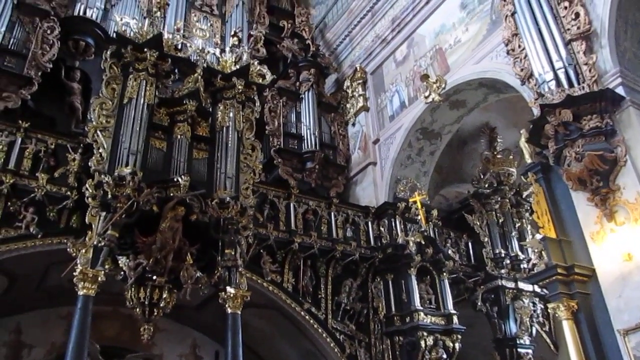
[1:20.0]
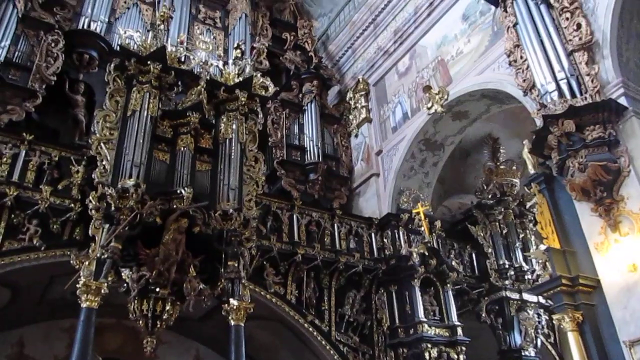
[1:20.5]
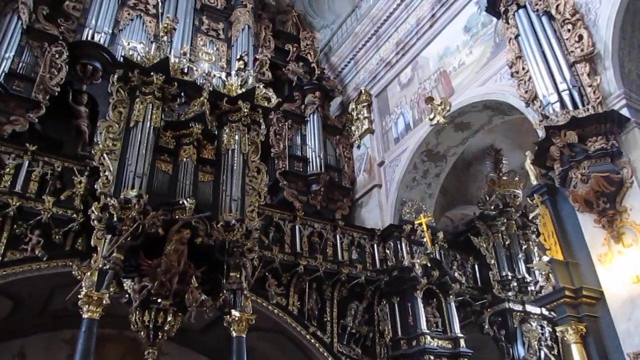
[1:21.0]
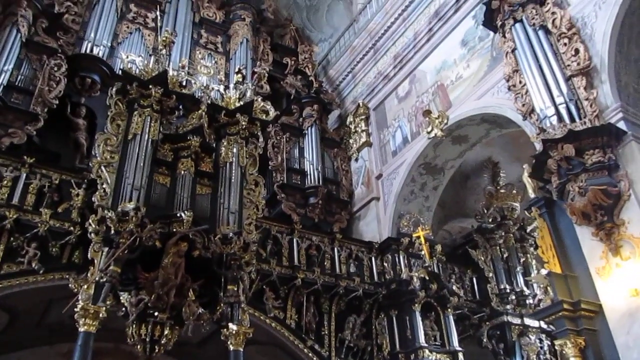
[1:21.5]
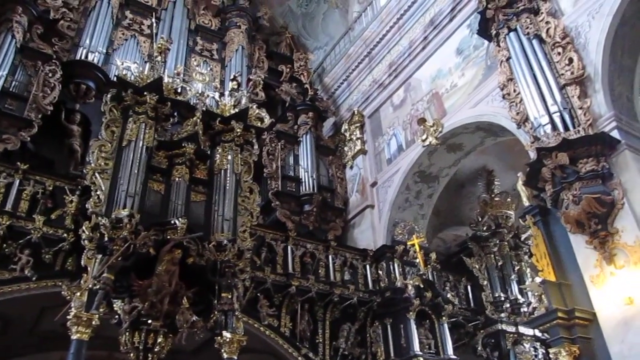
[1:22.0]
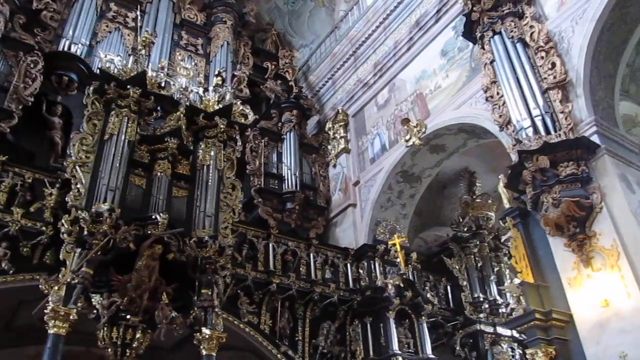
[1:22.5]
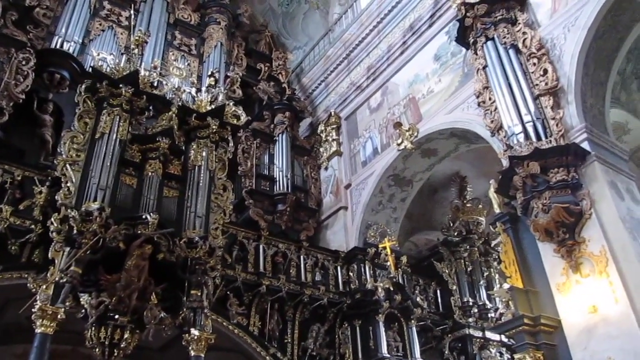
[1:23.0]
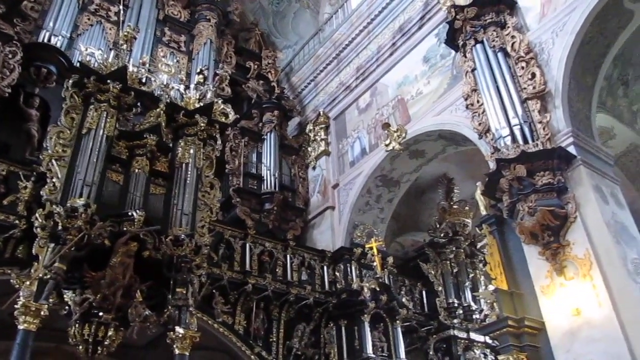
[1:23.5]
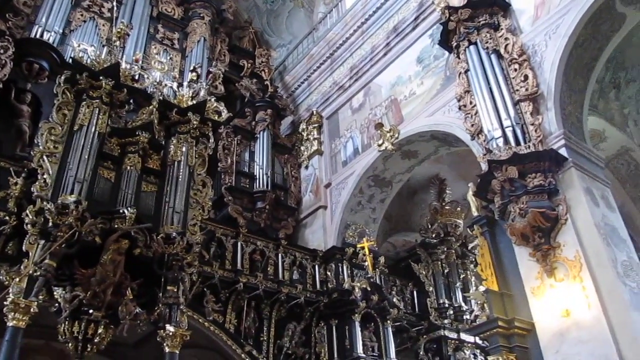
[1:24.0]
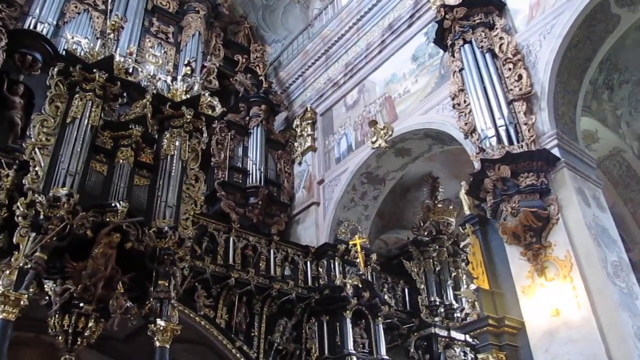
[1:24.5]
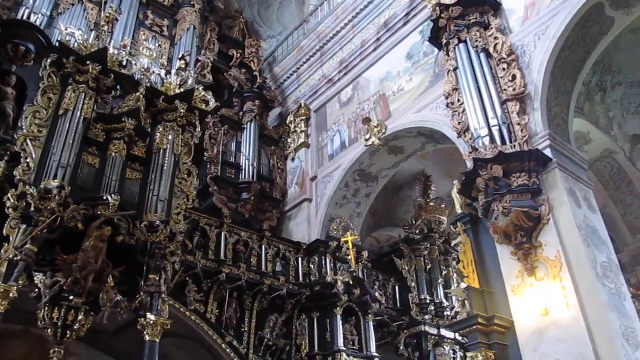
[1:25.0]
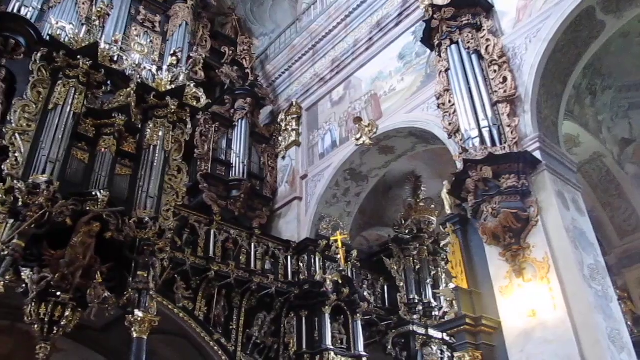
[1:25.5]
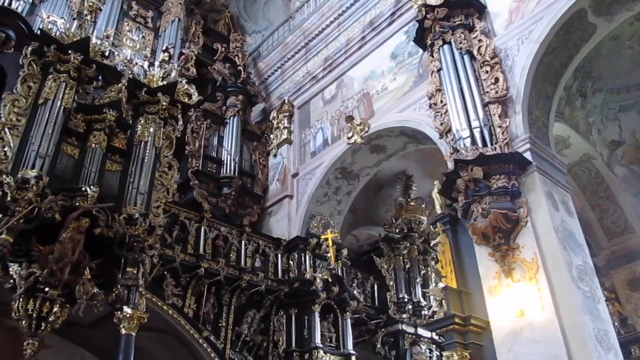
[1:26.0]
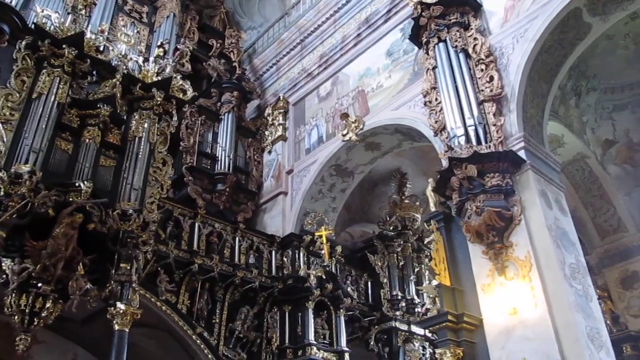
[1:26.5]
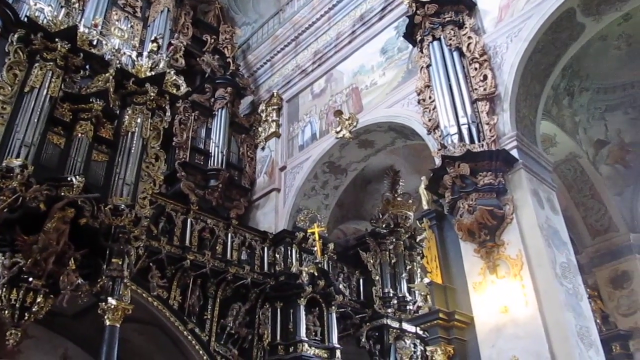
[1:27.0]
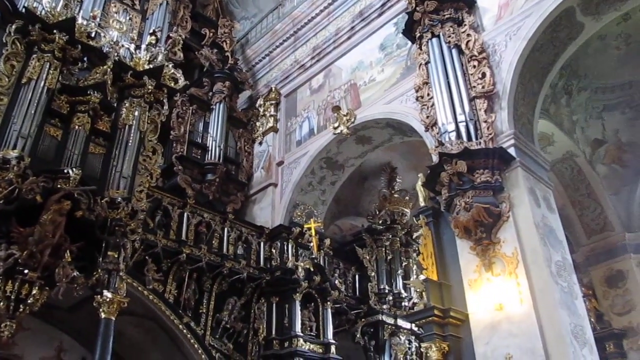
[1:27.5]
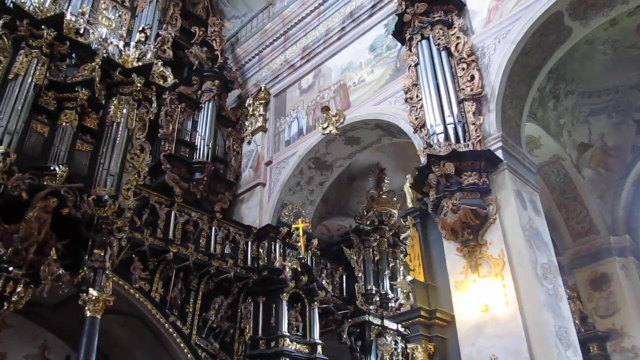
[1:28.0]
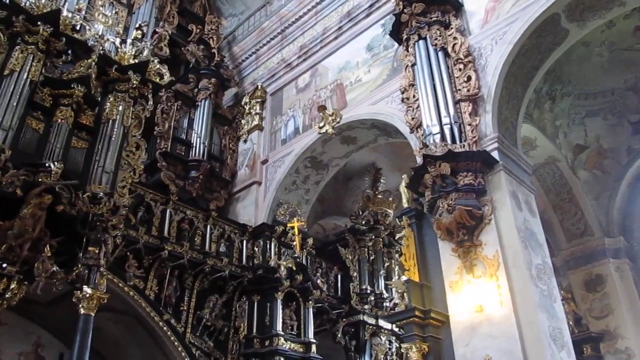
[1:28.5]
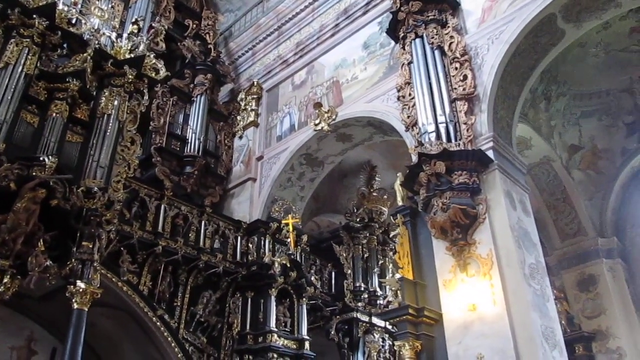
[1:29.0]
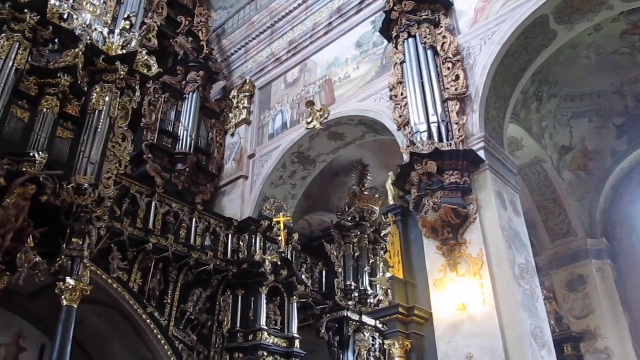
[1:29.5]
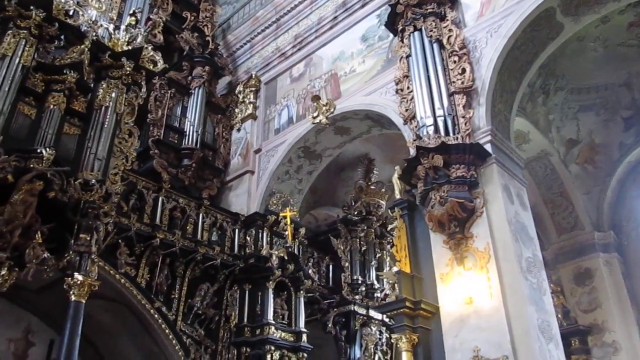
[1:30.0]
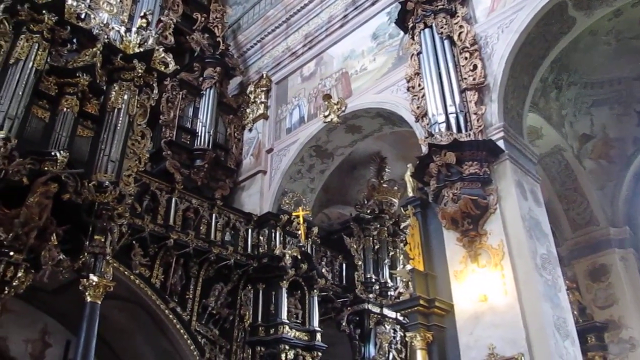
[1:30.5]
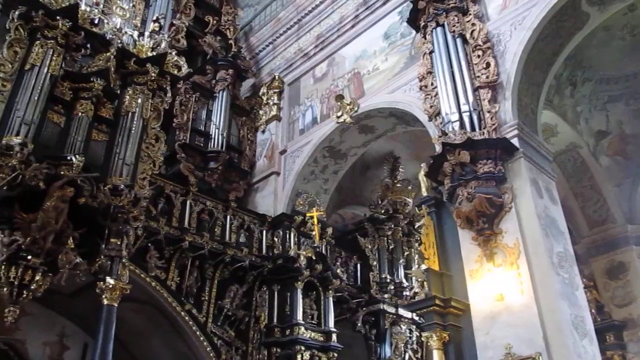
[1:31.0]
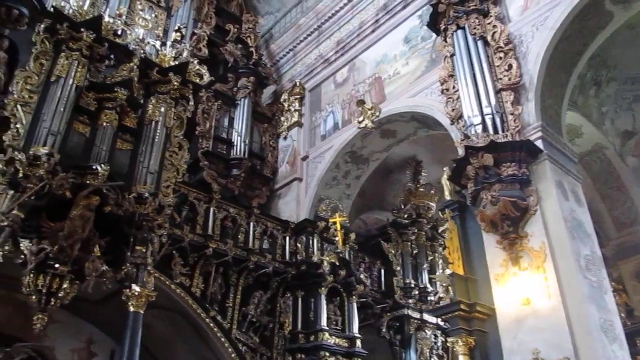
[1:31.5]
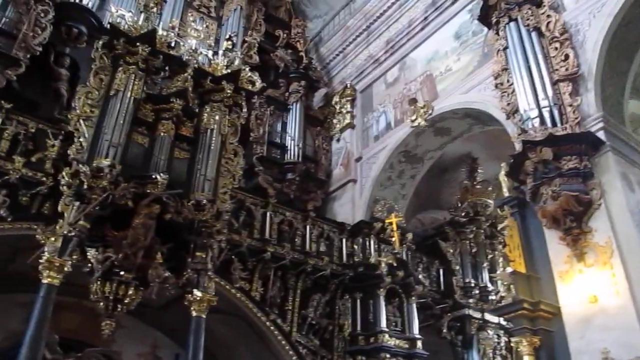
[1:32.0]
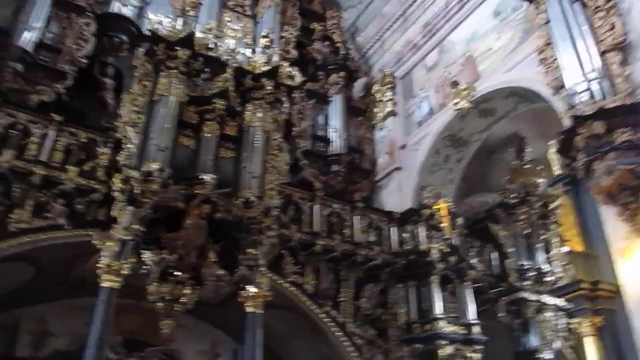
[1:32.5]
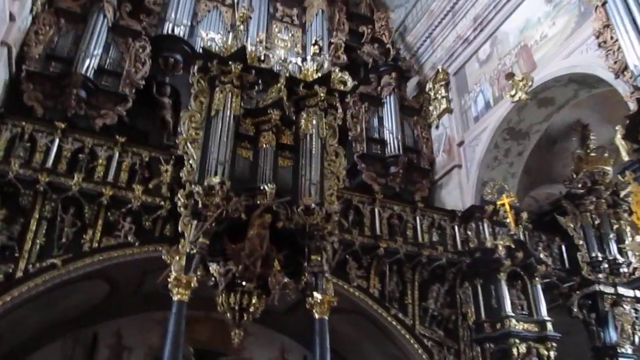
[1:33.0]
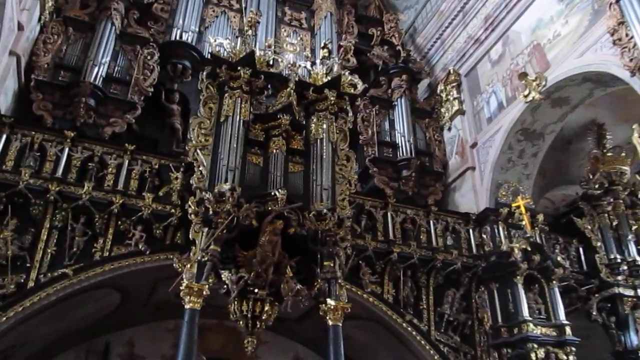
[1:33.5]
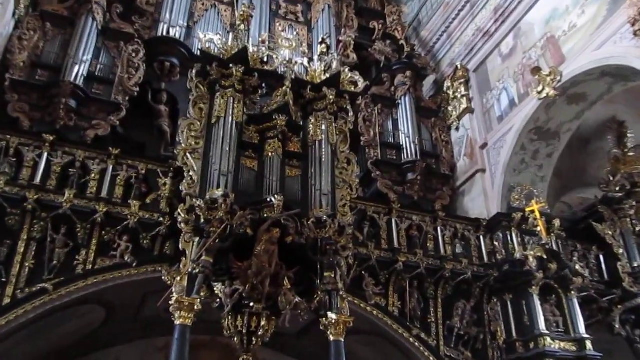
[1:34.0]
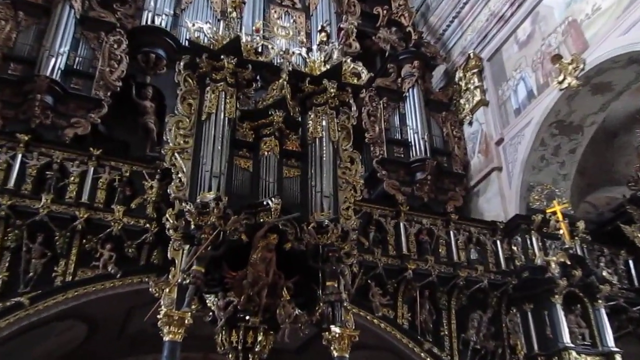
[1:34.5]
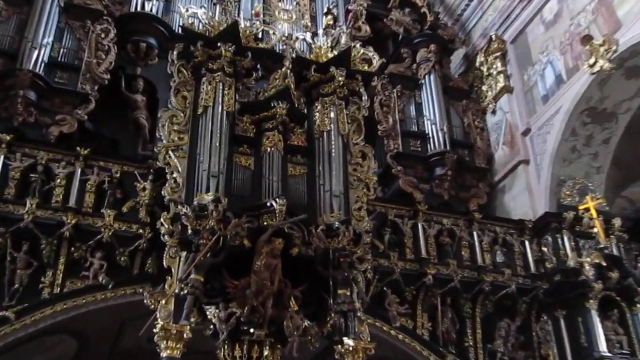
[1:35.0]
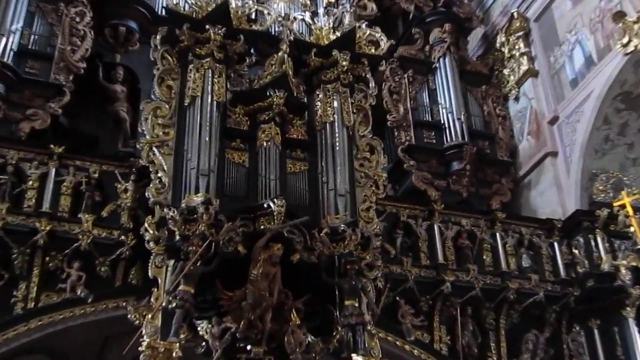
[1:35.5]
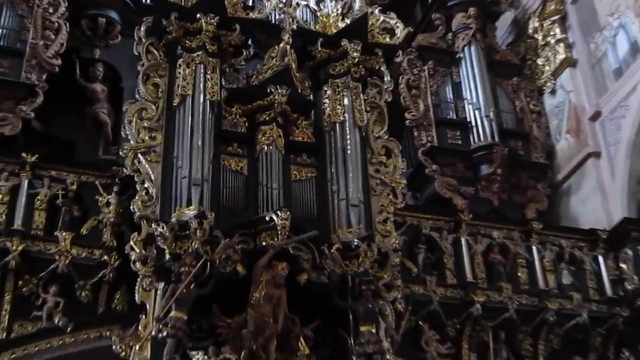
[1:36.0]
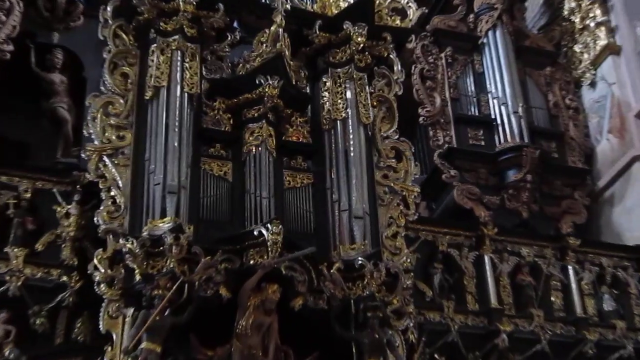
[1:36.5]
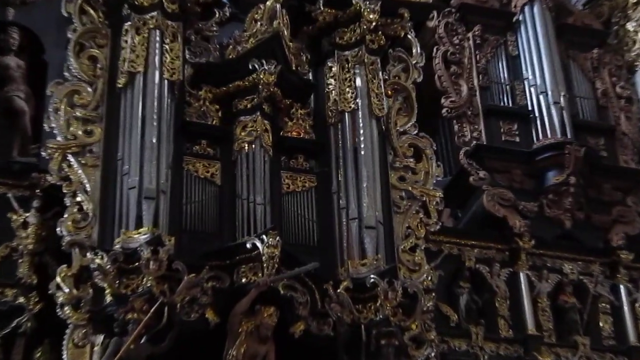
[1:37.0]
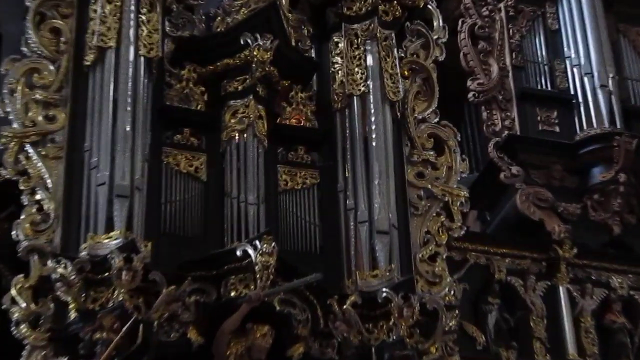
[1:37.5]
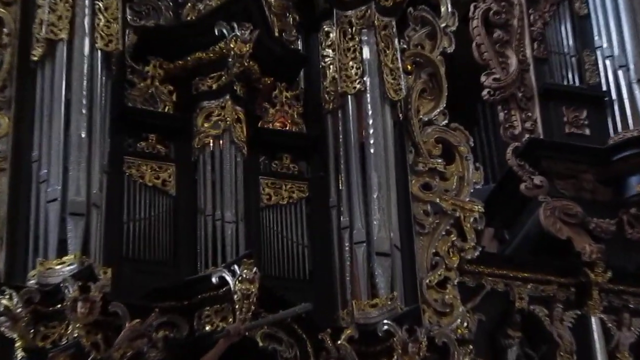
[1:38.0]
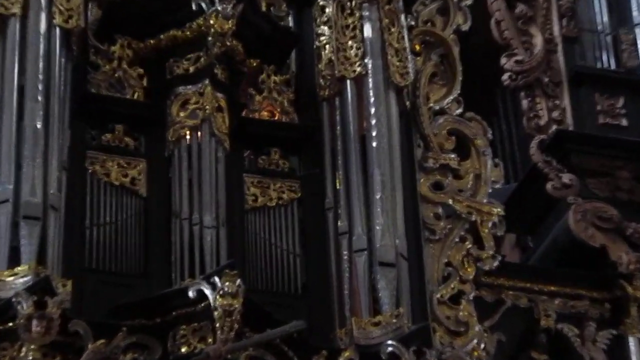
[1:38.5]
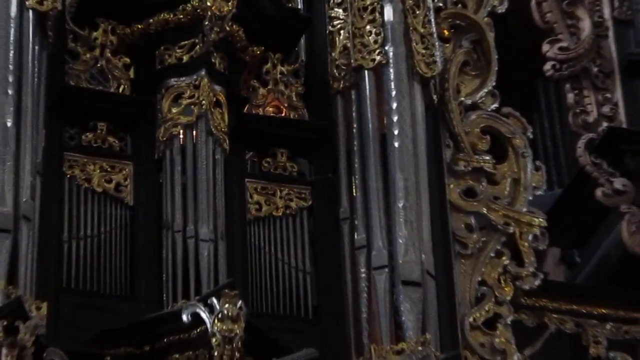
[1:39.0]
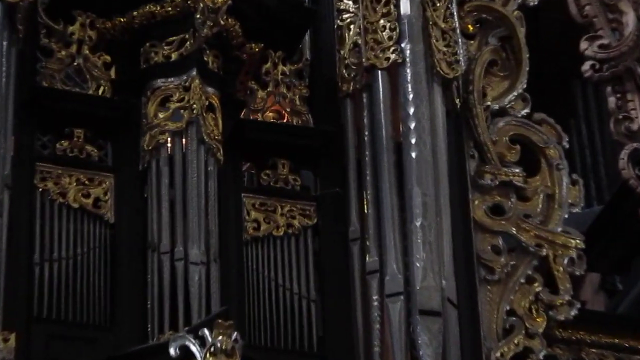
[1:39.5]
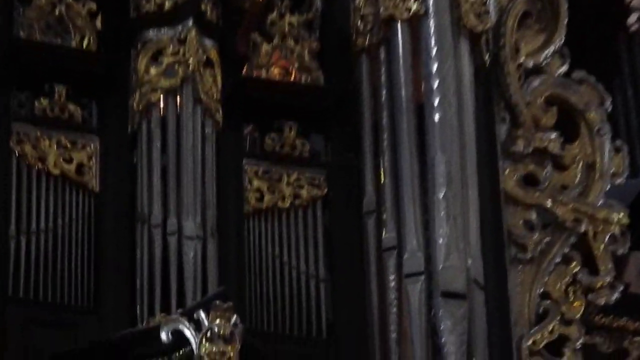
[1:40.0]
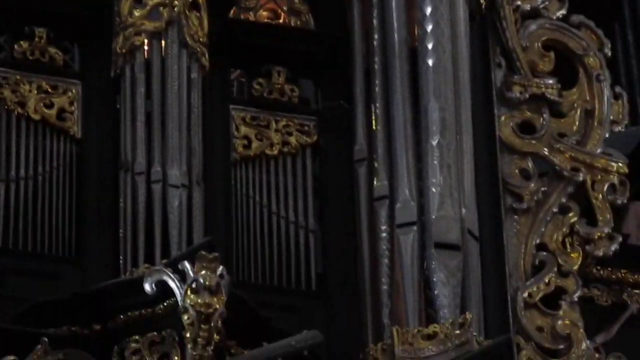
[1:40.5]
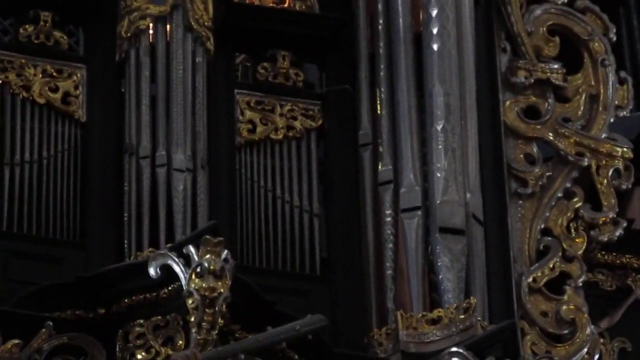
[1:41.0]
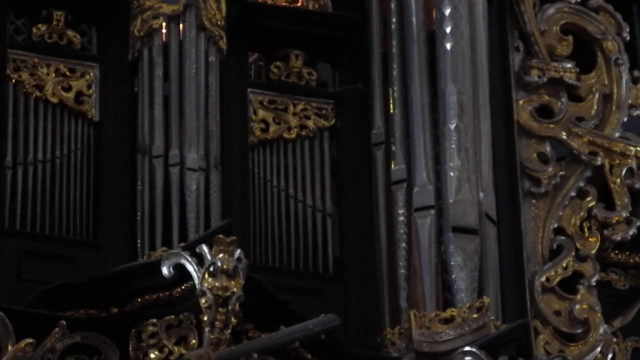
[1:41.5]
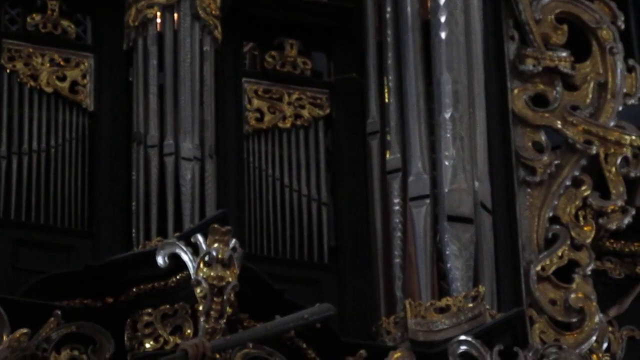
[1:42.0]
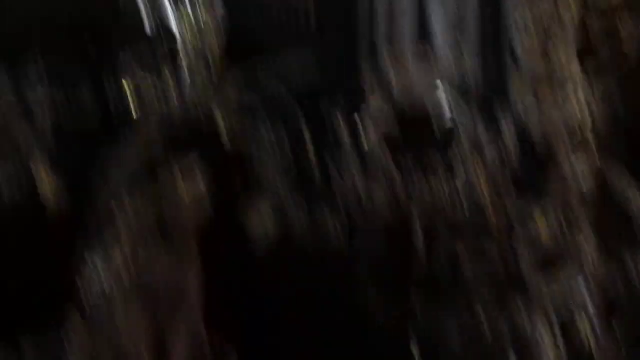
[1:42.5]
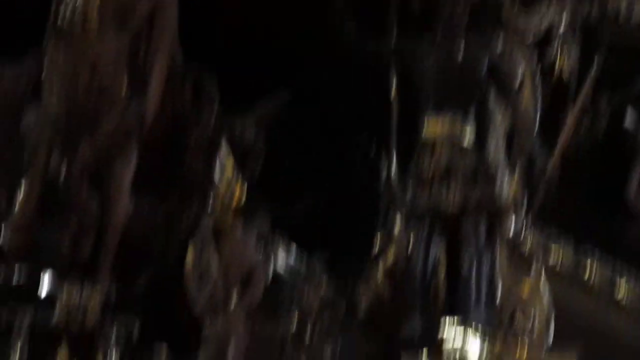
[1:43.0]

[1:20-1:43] The view of the upper area of the church shows the mural or painting on the wall. The camera moves to the left, views the center of the altar and zooms in very closely on a particular area. The view shifts to the right to the painting on the wall above an arch area, then back to the left, and focuses on the center of the wall or altar, zooming in on what looks like a golden creature's head, some sort of structure at the bottom.